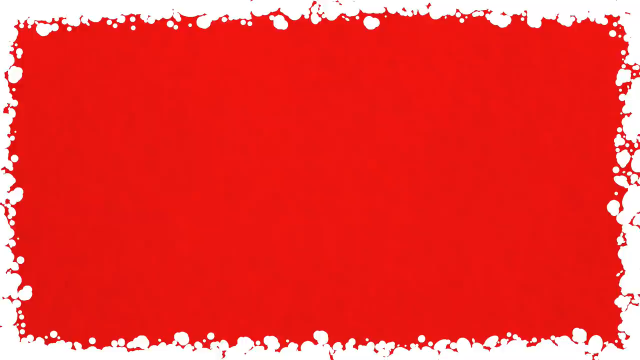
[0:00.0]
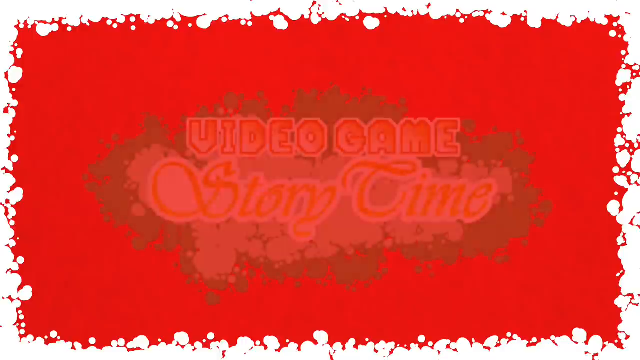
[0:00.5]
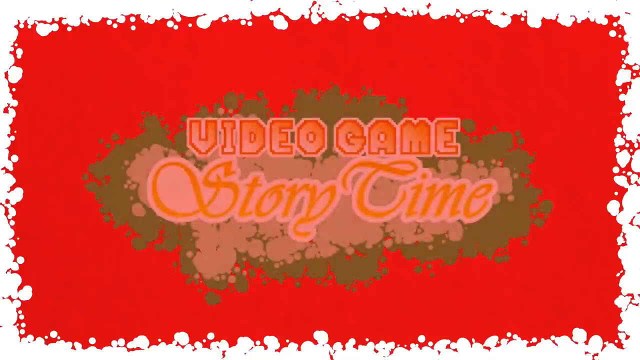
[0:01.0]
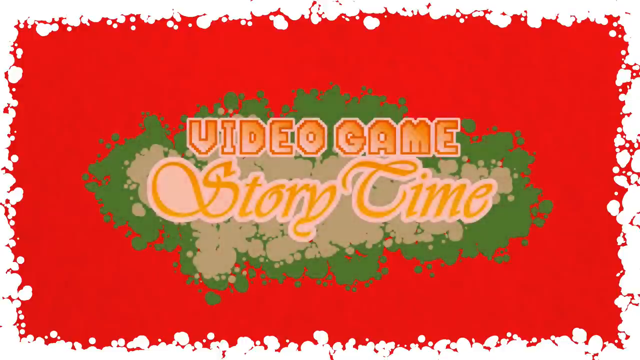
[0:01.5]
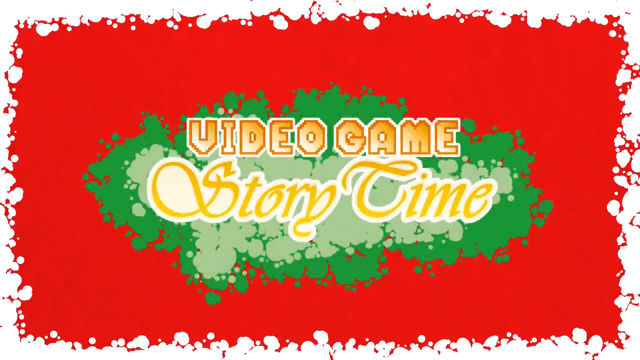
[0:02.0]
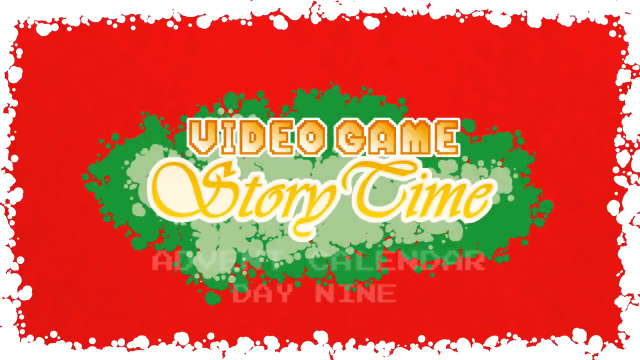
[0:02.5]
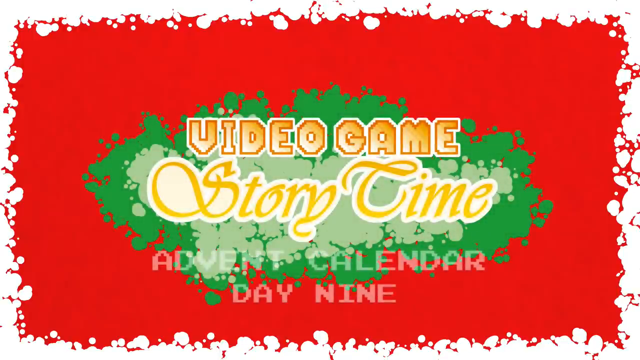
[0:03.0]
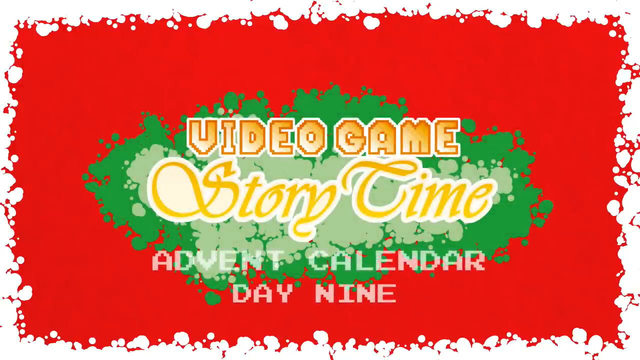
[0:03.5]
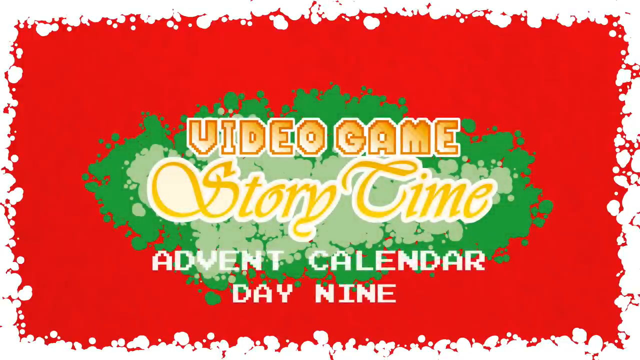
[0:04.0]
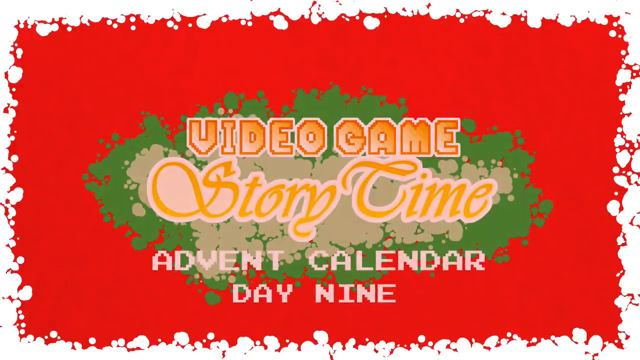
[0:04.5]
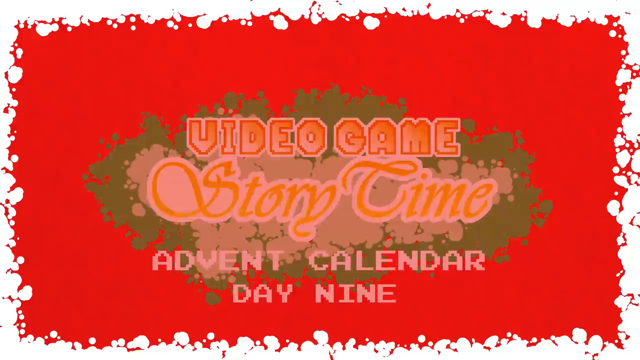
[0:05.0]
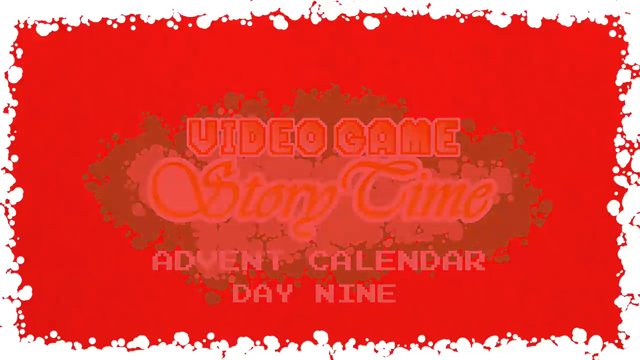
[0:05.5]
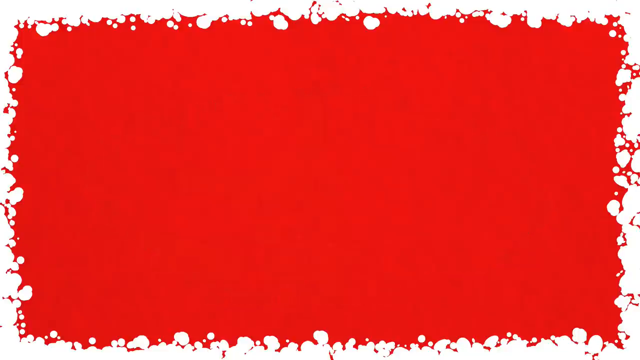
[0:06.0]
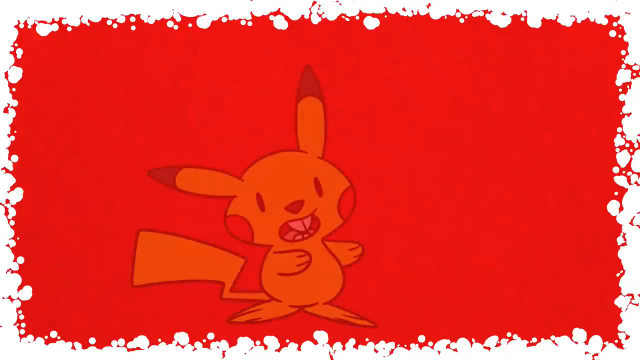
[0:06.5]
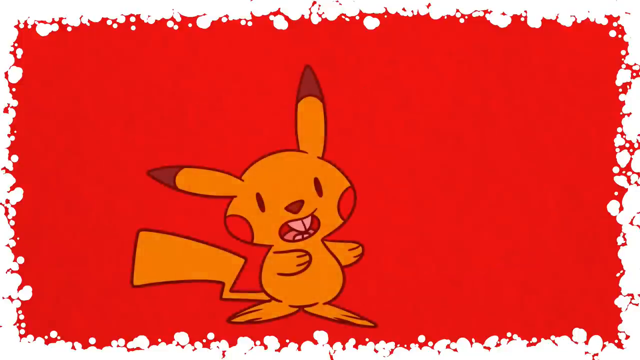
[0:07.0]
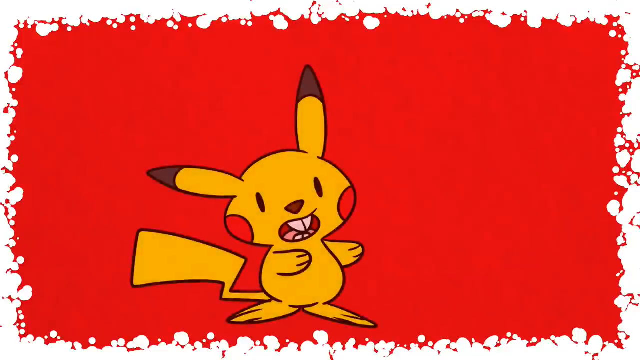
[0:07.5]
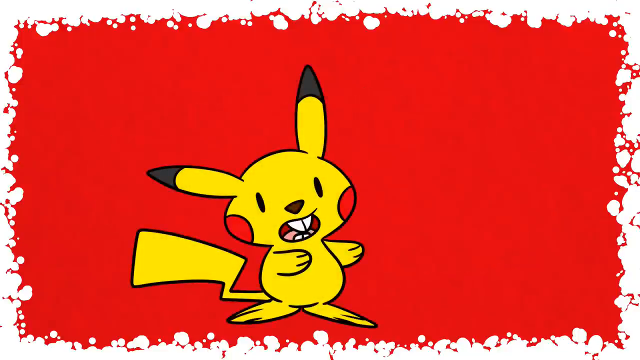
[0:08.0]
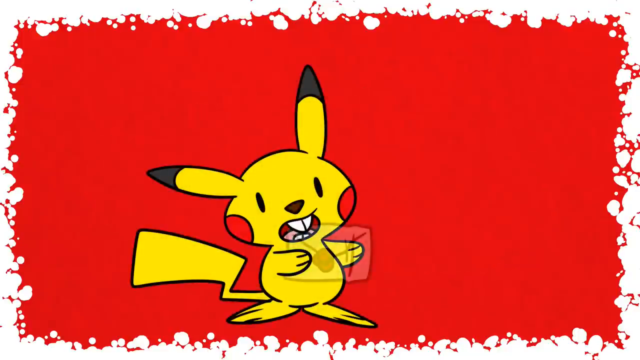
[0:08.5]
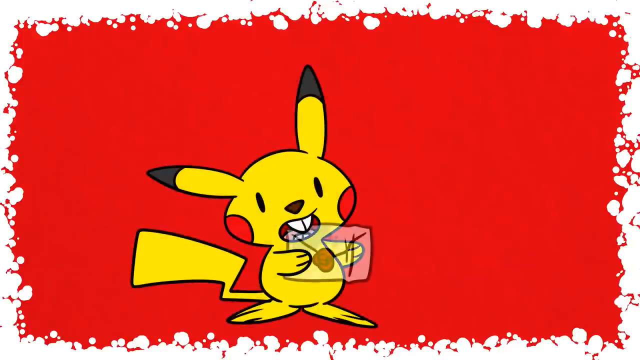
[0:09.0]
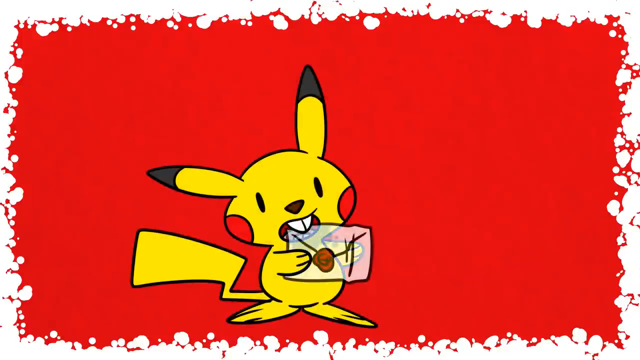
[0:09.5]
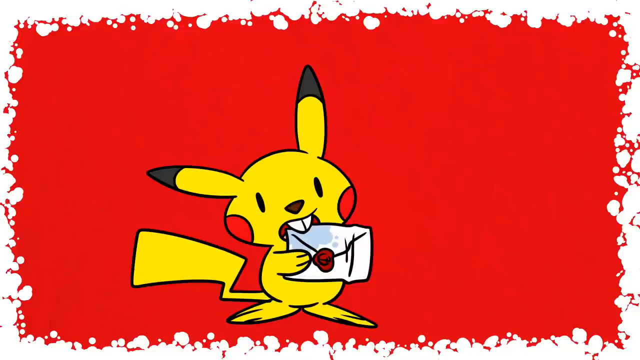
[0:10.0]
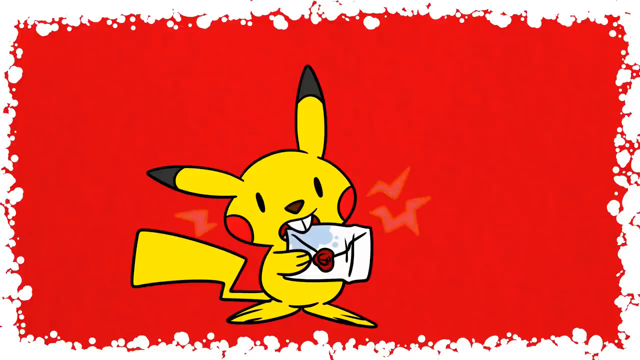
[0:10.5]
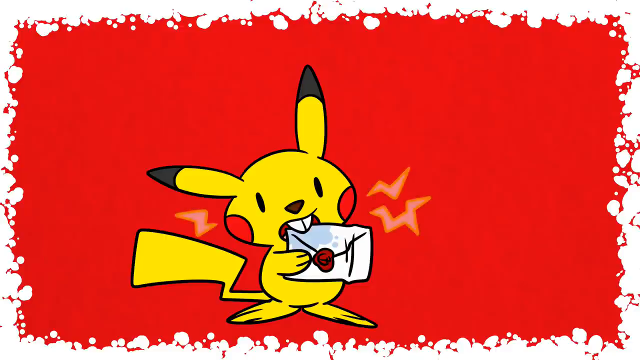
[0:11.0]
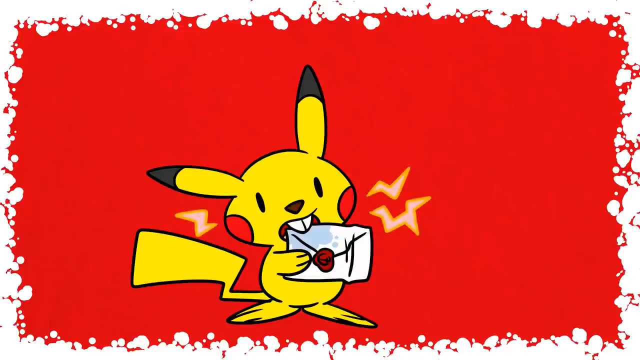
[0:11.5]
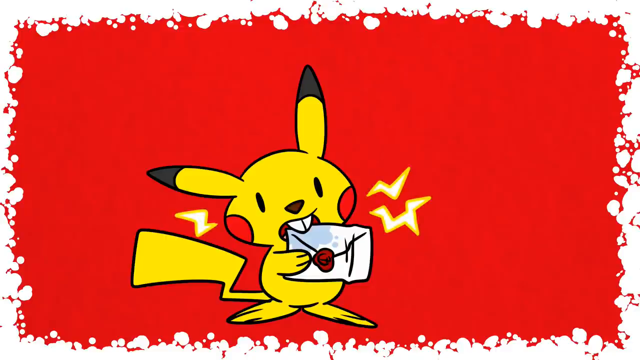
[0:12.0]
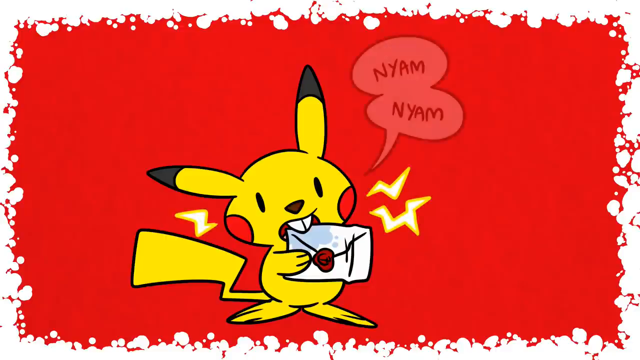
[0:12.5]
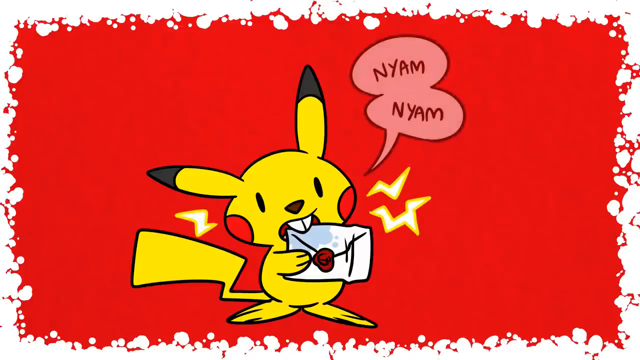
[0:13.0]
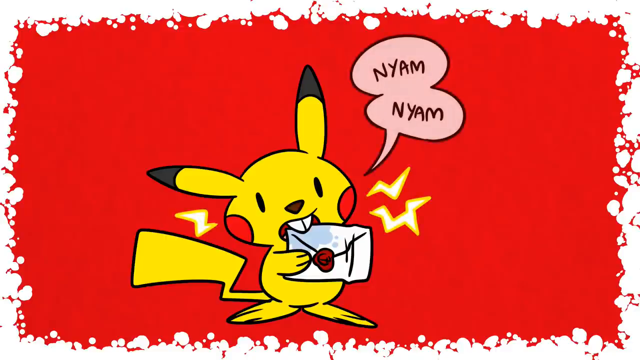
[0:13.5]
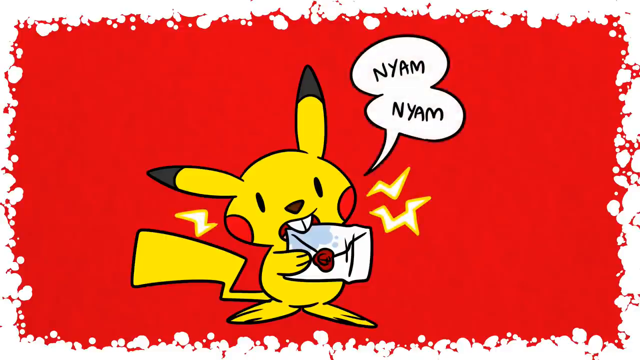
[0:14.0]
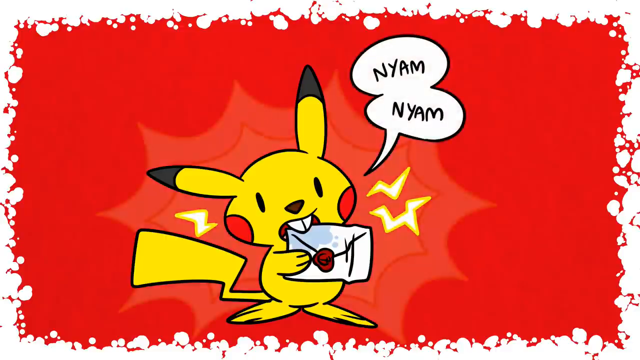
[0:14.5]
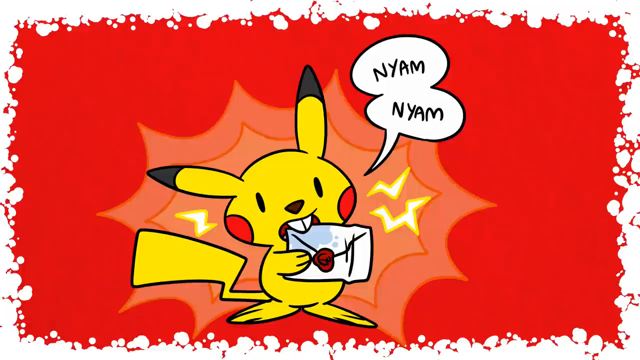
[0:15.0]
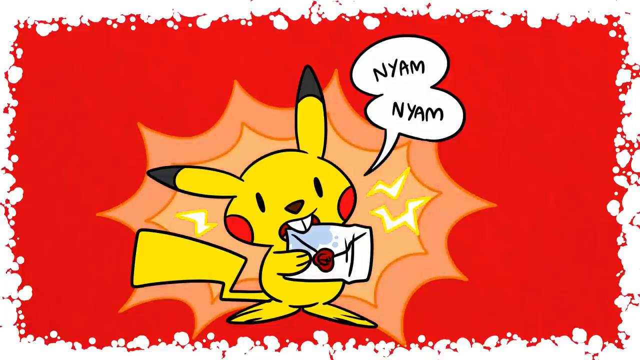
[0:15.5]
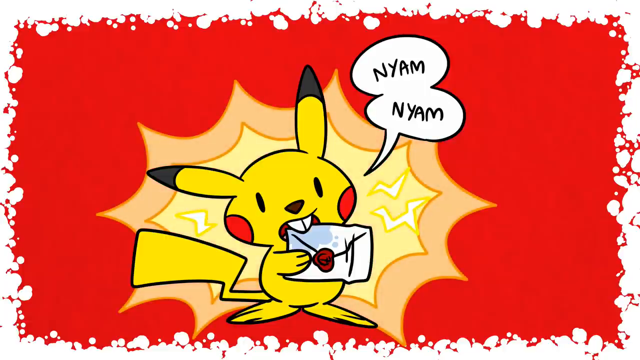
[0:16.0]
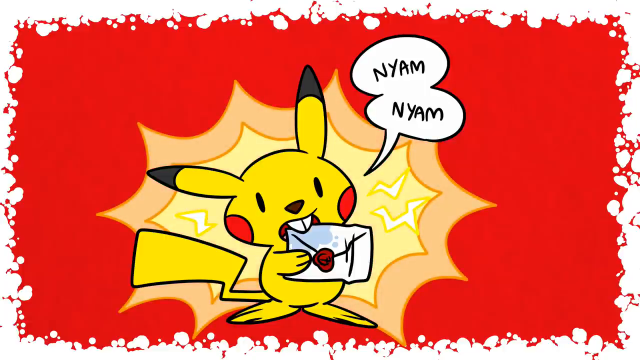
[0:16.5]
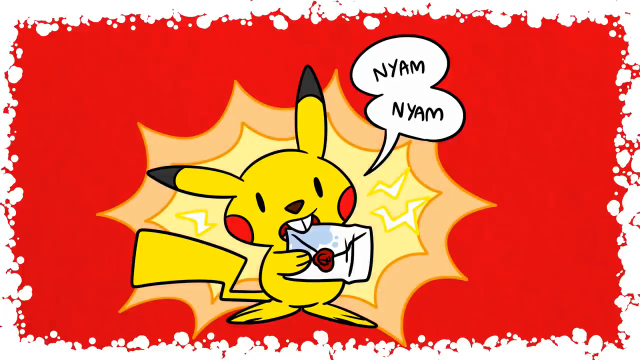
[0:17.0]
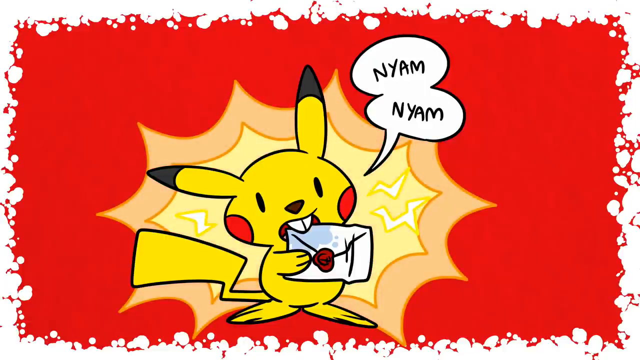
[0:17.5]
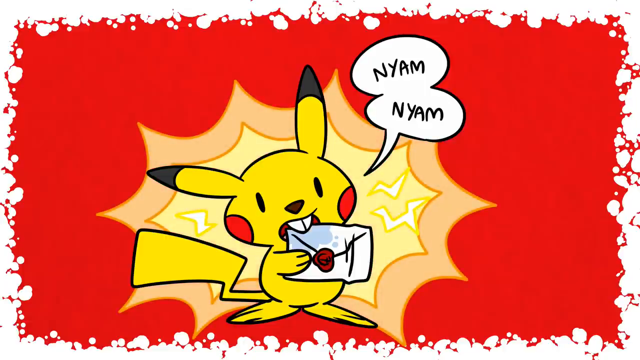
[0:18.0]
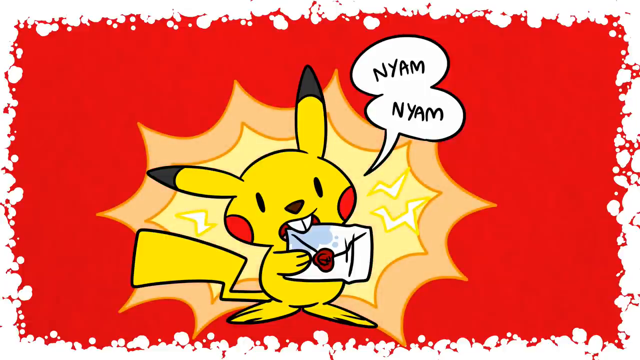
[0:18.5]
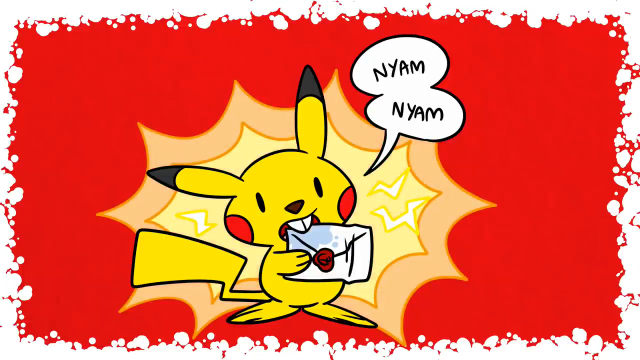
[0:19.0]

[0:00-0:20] The video opens on a red background whose edges look almost burned white. Slowly fading into the middle of the screen is a green ink blob with a lighter green ink blob in its centre, and it reads "video game story time advent calendar day nine." That slowly fades off the screen, and a little Pikachu fades in, holding a letter that he is eating. Some lightning bolts appear, along with a little text blob saying "nom nom." In the background behind him, more electricity is kind of forming in an almost text-blob fashion. The Pikachu is drawn in a cartoon-esque style, almost looking like a beaver, with black-tipped ears and big rosy red circles on his cheeks, and little lightning bolts kind of jolting off him to show that he is electric at the moment.